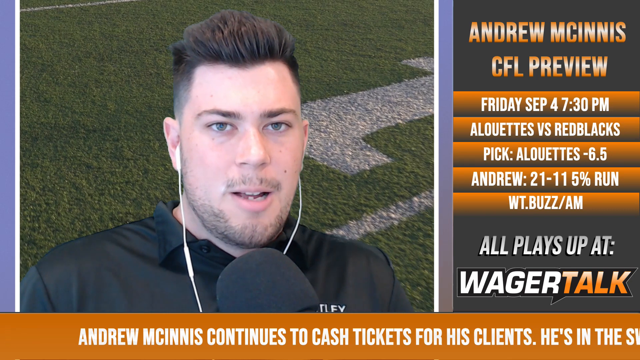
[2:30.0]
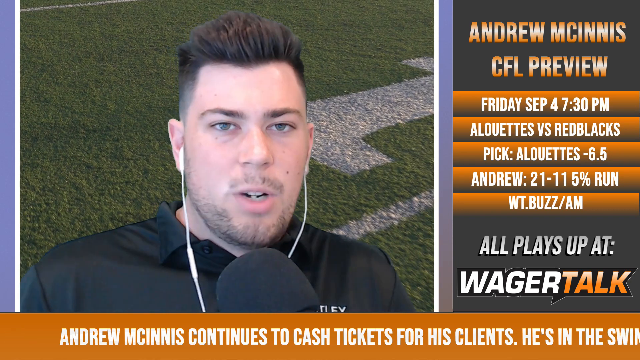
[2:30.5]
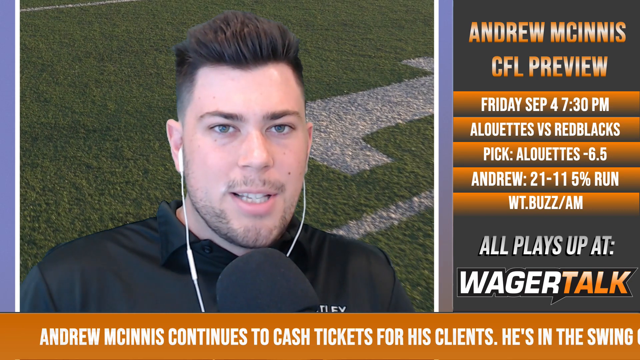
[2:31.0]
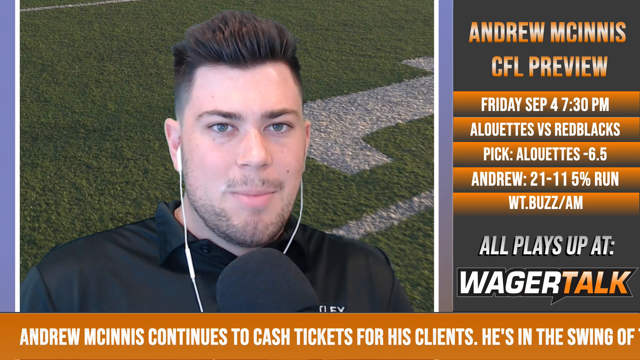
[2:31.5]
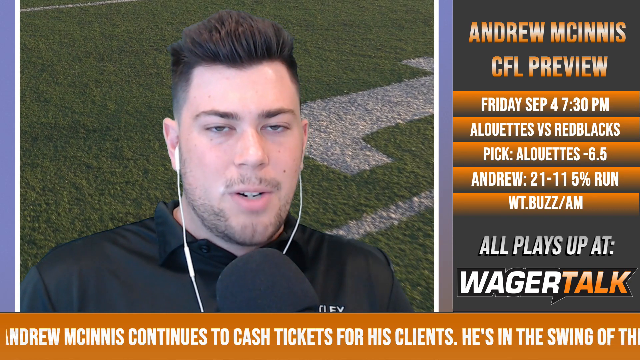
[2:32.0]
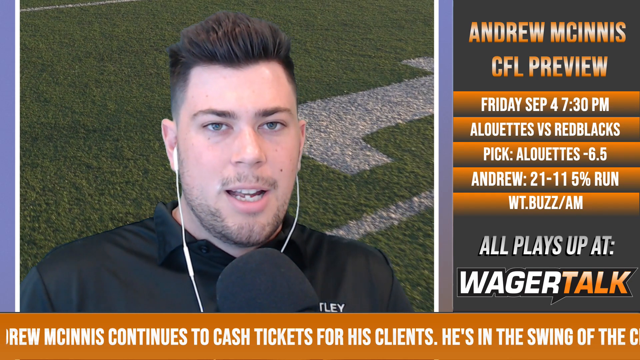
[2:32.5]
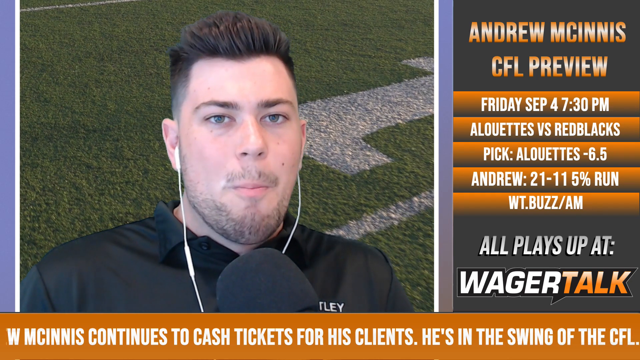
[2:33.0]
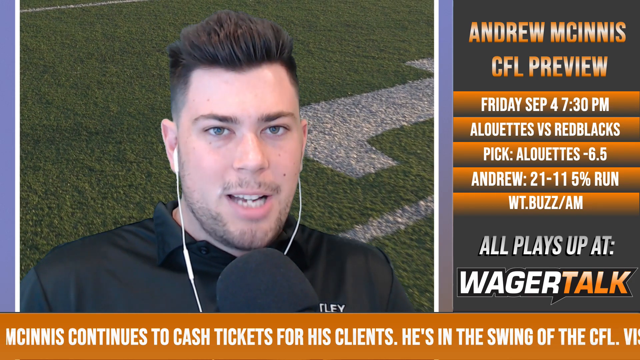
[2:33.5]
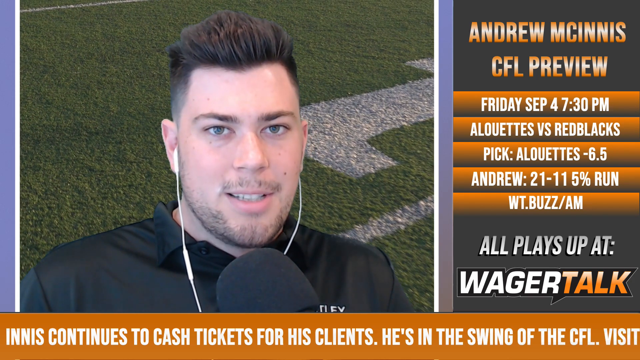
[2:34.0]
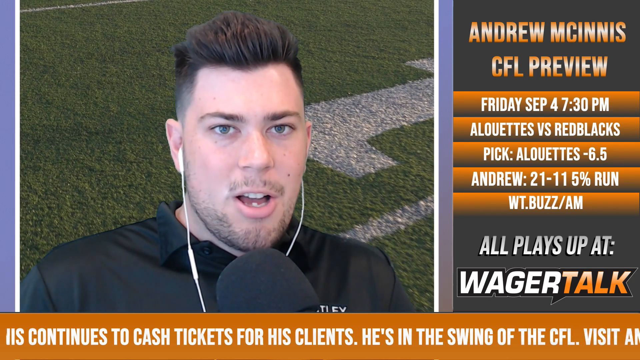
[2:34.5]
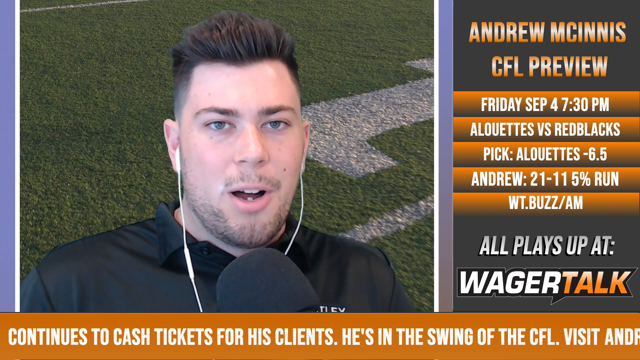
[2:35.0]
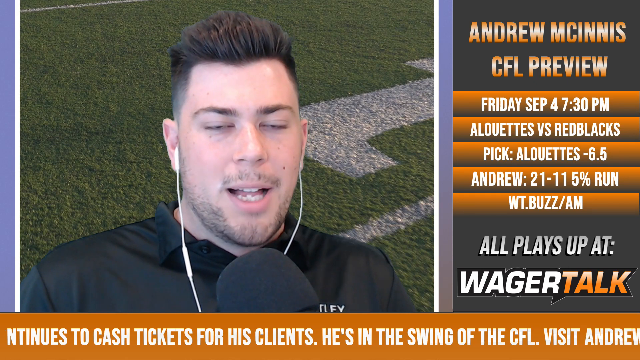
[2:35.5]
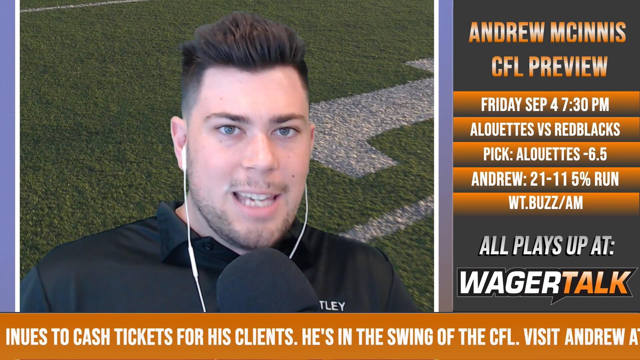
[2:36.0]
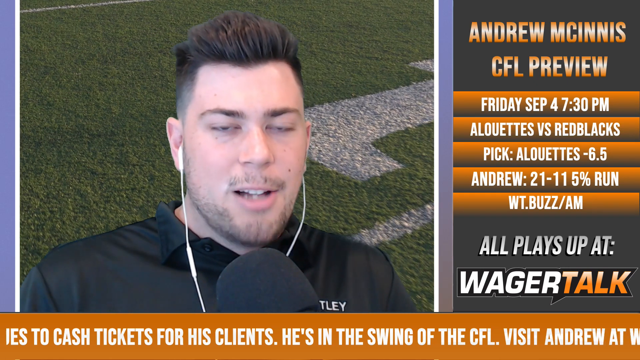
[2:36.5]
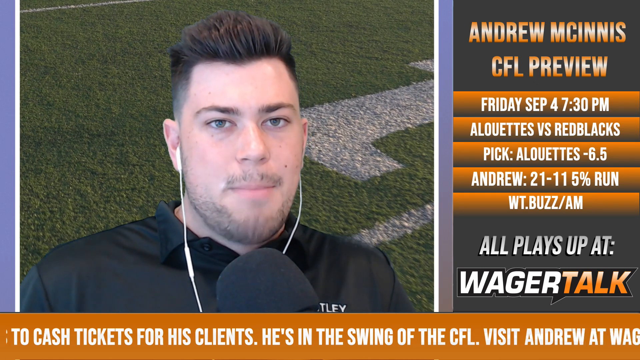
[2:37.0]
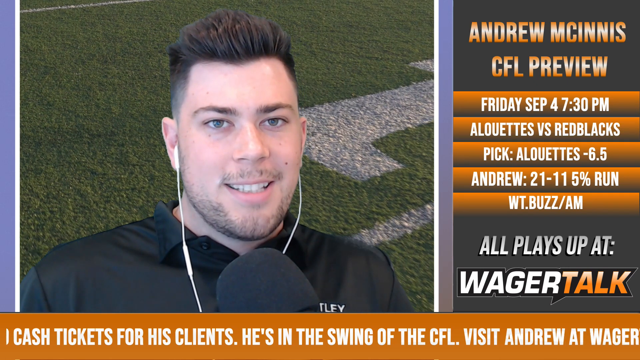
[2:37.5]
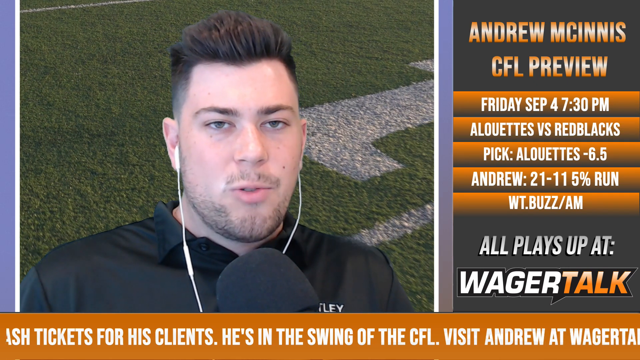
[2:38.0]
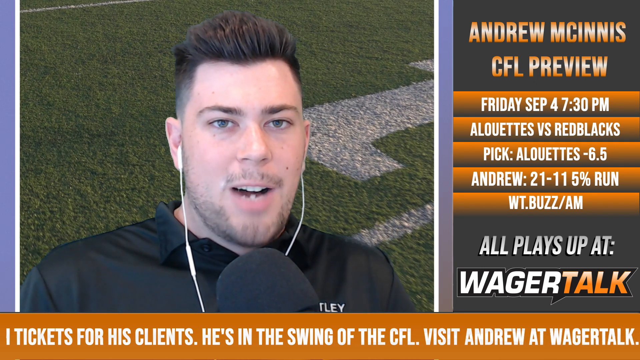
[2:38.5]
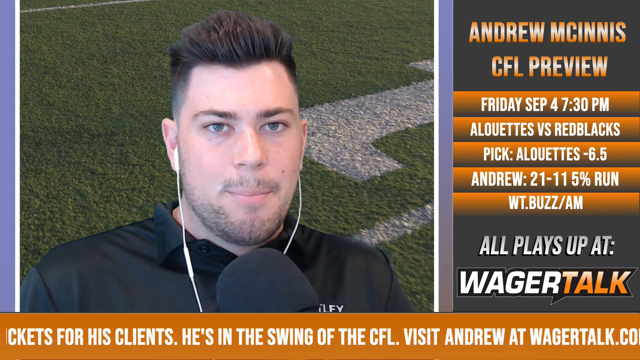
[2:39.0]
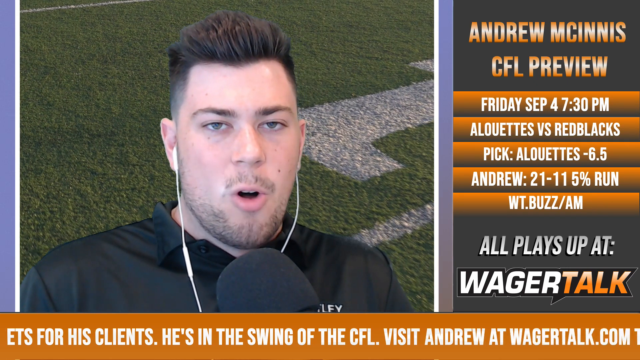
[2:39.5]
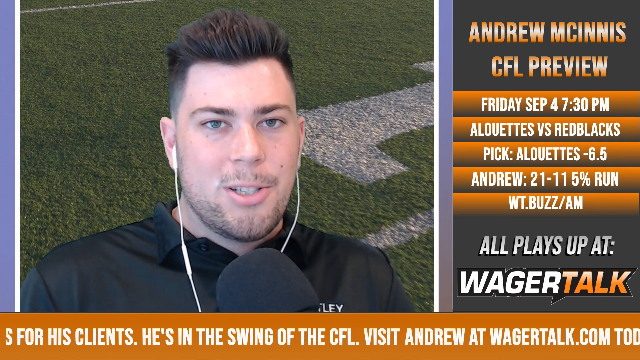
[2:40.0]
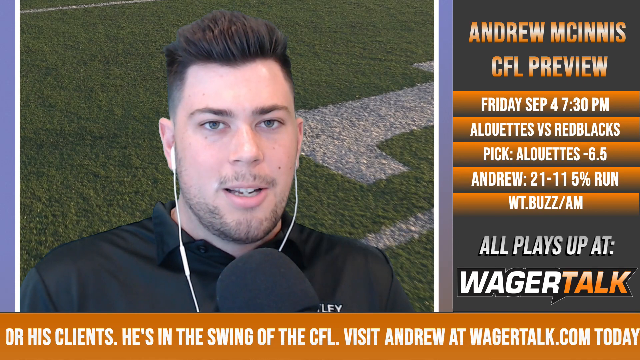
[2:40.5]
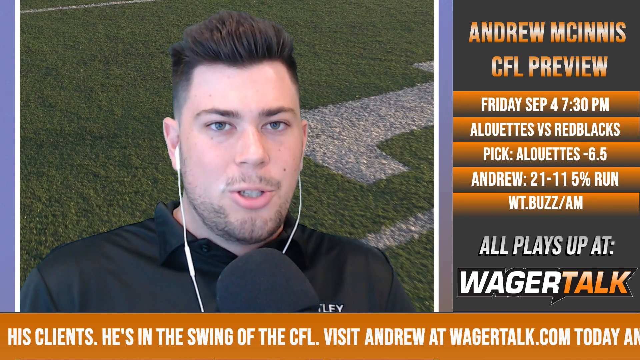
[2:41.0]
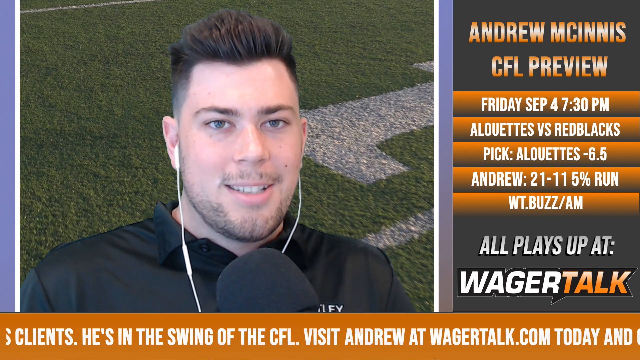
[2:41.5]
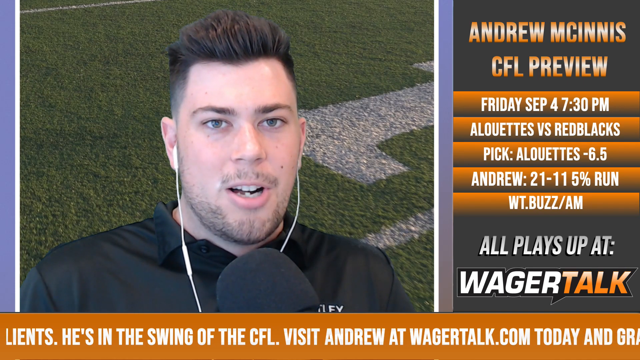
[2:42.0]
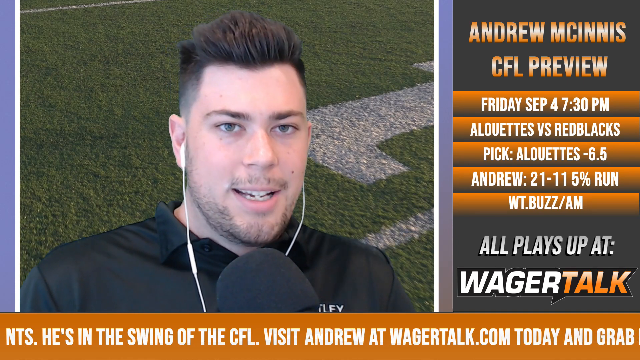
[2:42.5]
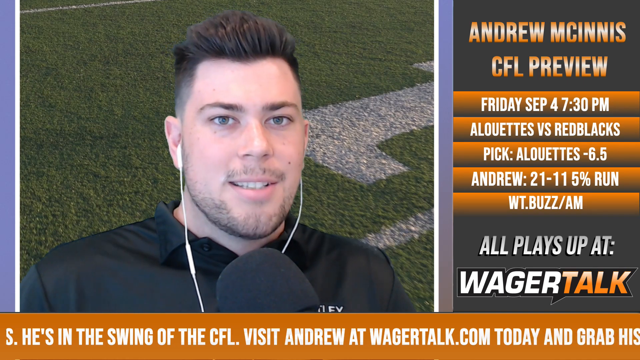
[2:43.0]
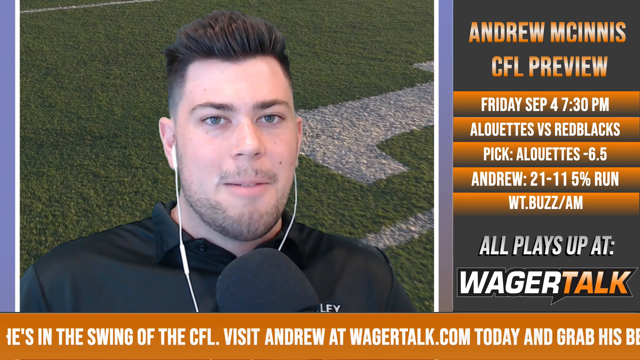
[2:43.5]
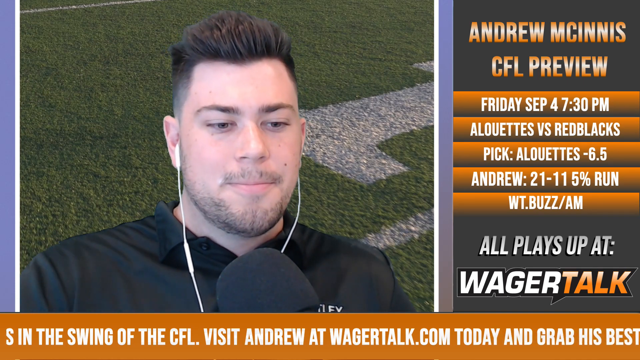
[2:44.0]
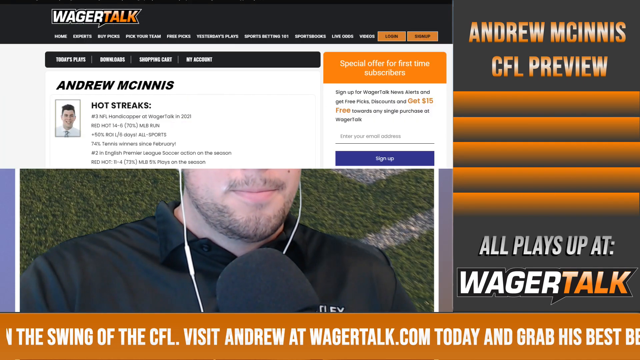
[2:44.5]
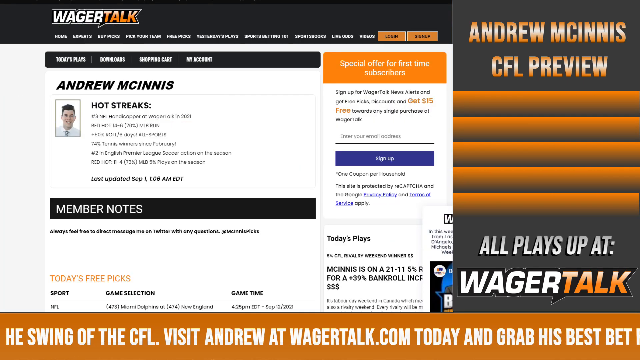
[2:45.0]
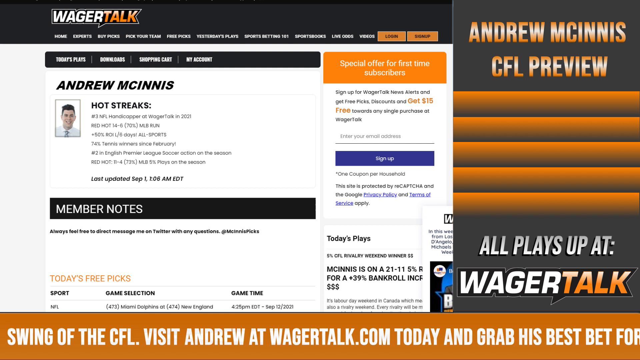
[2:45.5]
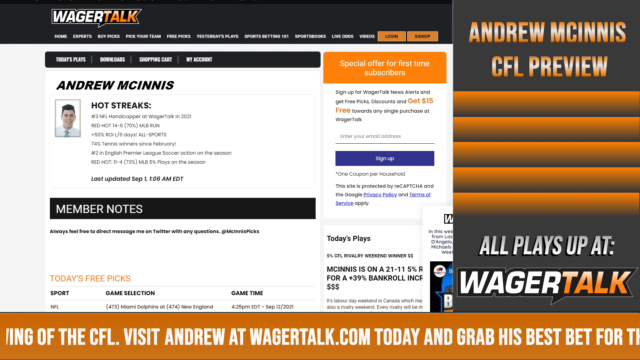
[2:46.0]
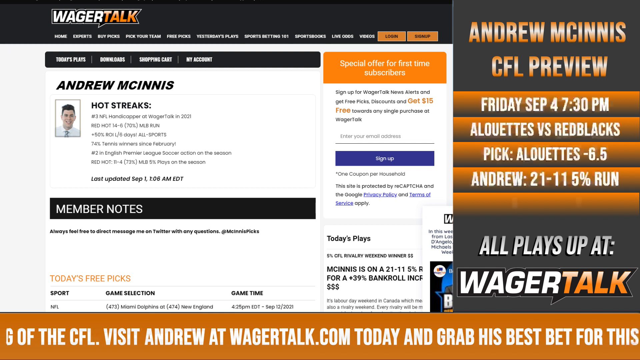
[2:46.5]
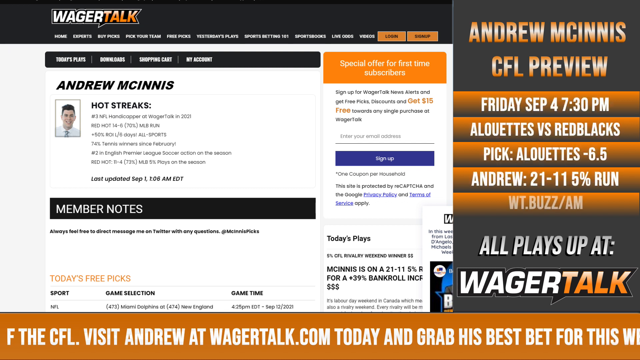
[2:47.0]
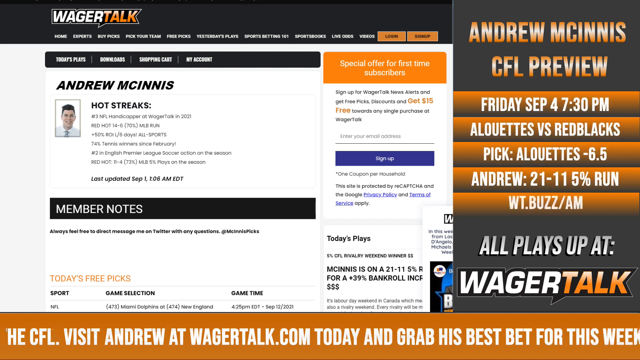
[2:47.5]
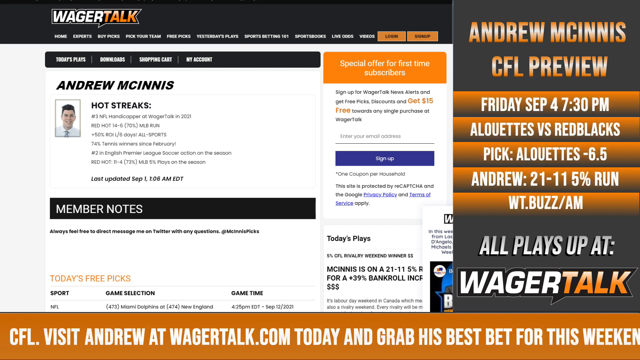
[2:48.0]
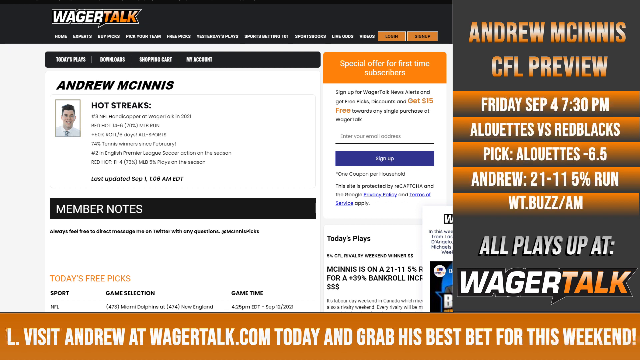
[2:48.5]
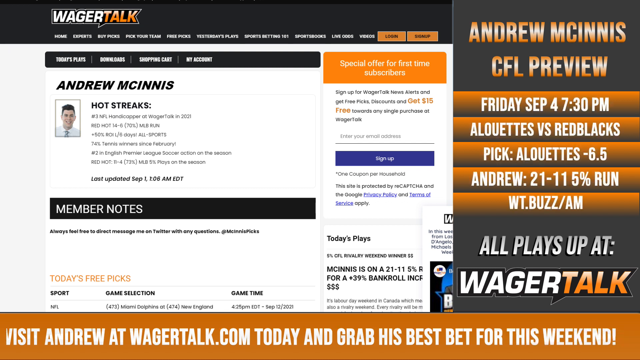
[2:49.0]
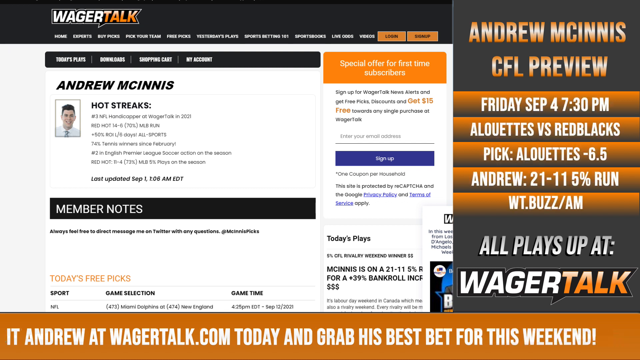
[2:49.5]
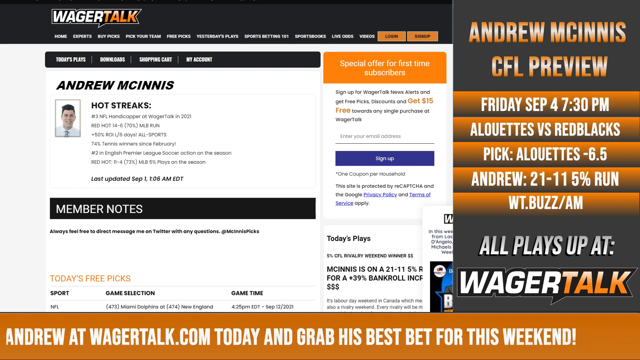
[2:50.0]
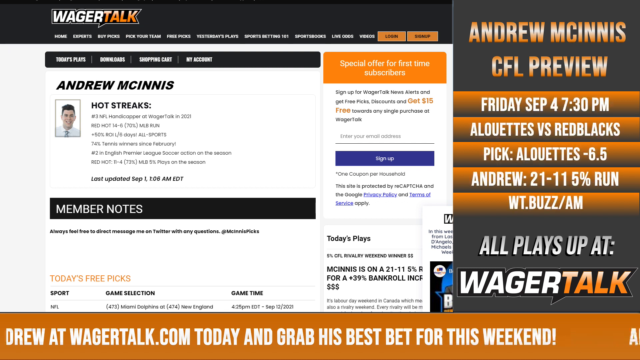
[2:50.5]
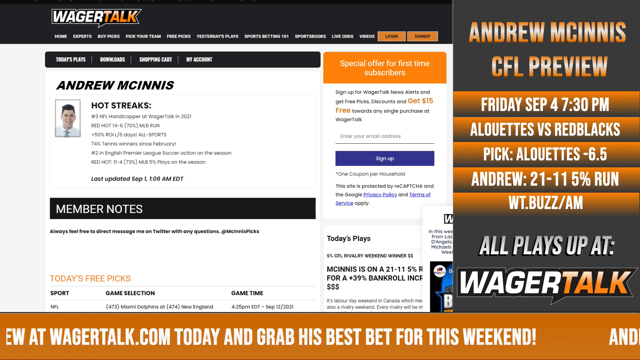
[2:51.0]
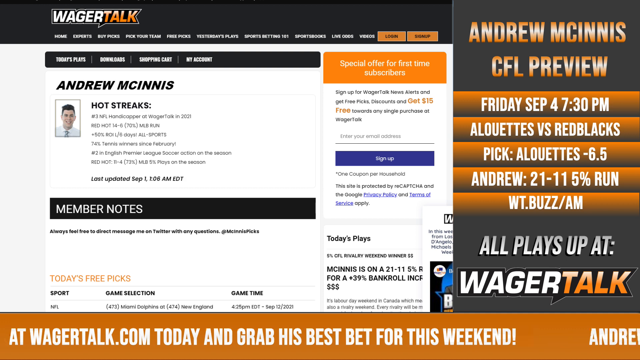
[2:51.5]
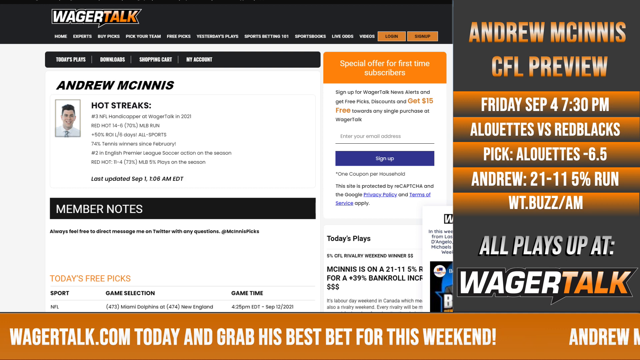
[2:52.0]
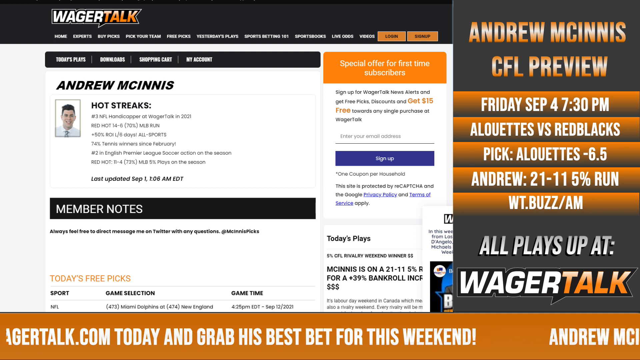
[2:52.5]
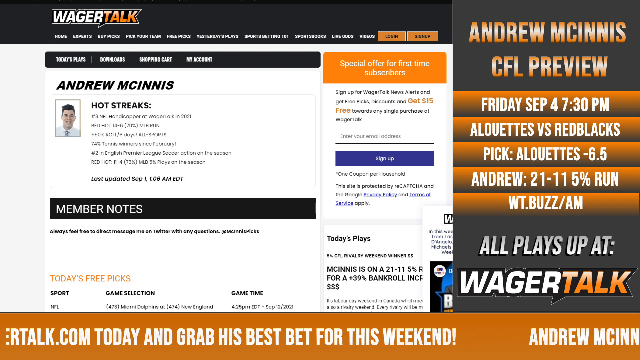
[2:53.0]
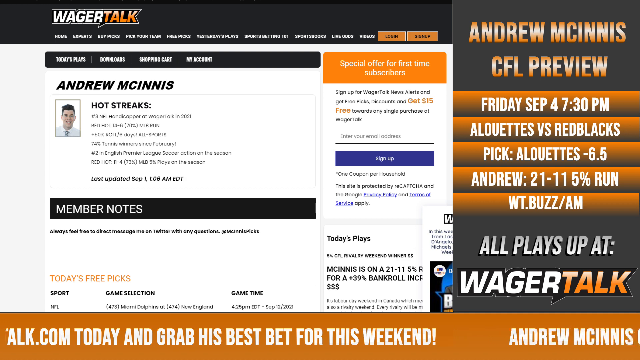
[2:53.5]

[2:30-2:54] A young man, looking to be in his 20s, with very short side-cut hair is talking. While he talks, a screen comes down from the top with what appears to be a website. It says "Wager Talk," "Andrew McInnes" and "Hot Streaks," has a small profile picture of somebody, and looks to list a bunch of statistics. Below that is "member notes" with some writing beneath it in a very small font. Over to the right it says "special offer for first time subscribers," "Sign up for Wager Talks" and "get $15 free," with fields for an email address and signing up. It also says "one coupon per household" and "This site is protected by ReCAPTCHA and the Google Privacy Policy." The website also has options to log in and sign up and some information on today's plays.